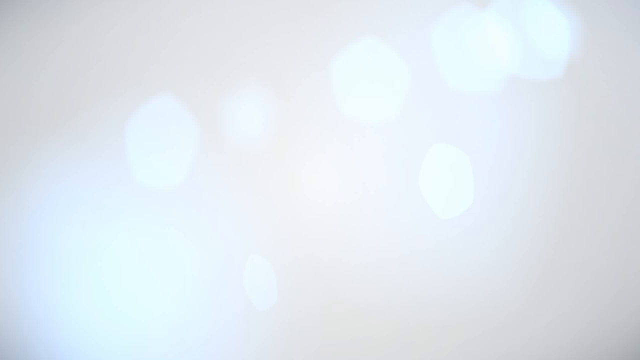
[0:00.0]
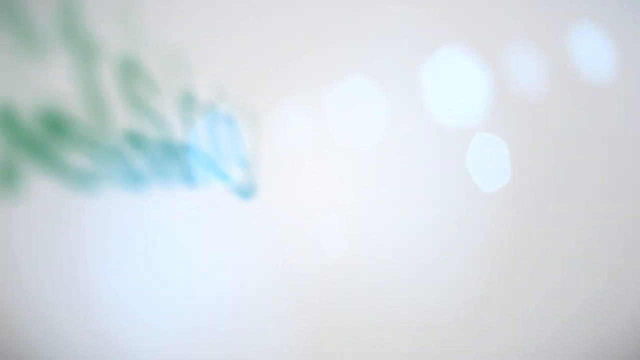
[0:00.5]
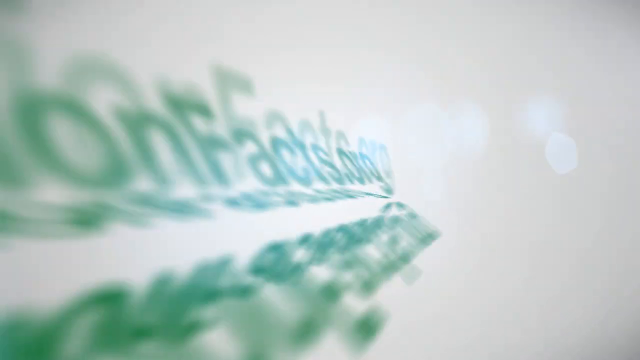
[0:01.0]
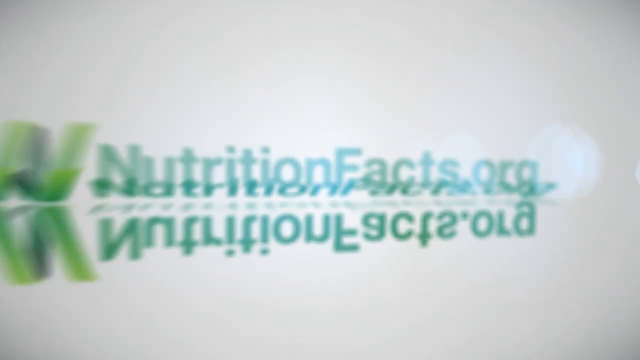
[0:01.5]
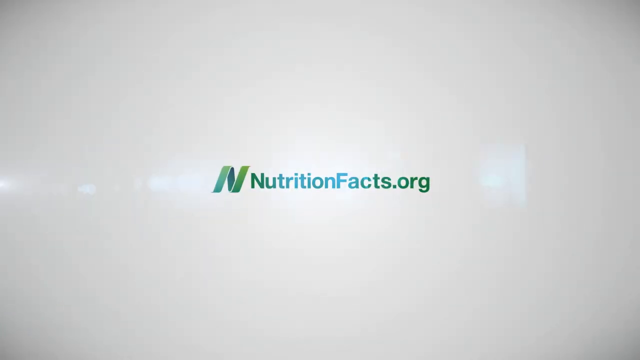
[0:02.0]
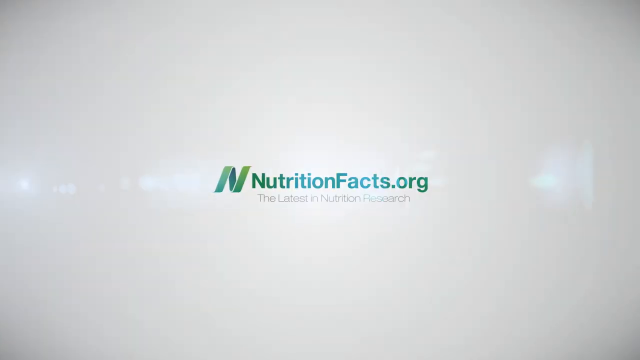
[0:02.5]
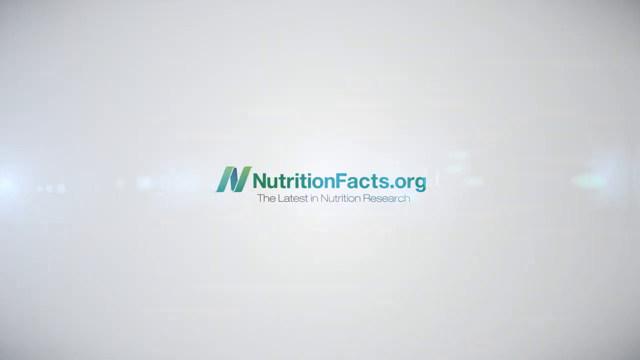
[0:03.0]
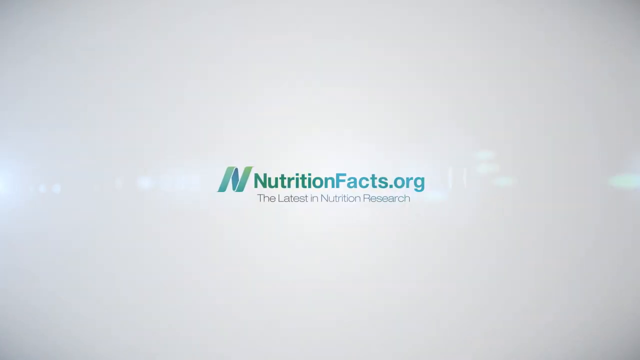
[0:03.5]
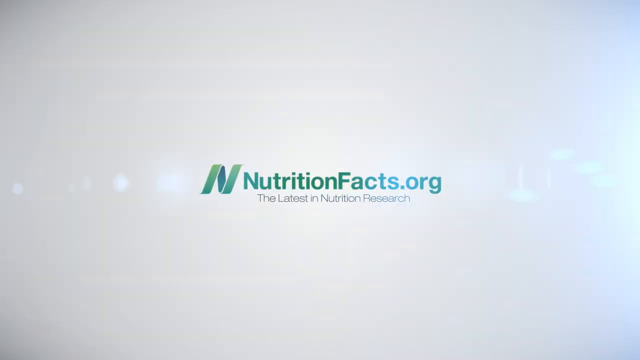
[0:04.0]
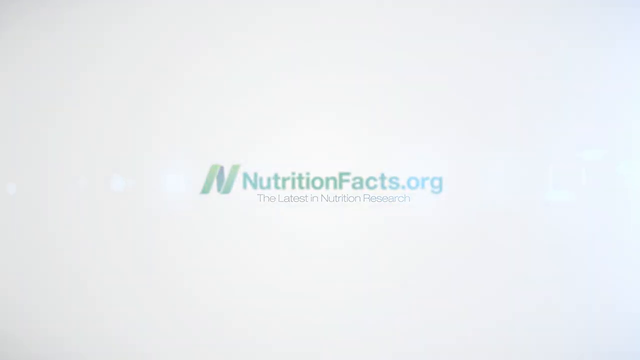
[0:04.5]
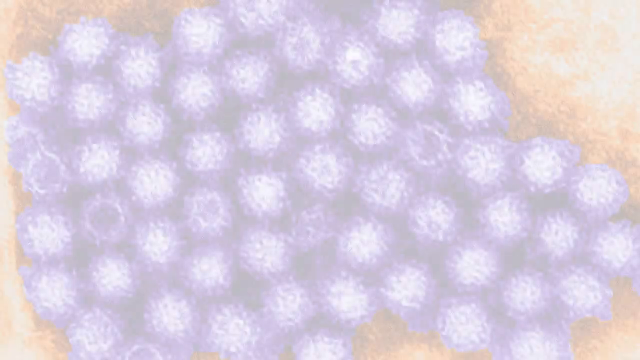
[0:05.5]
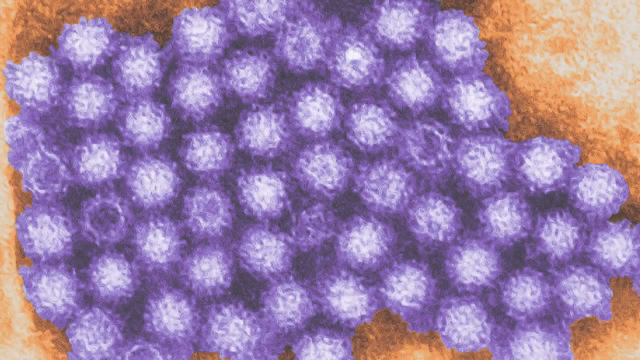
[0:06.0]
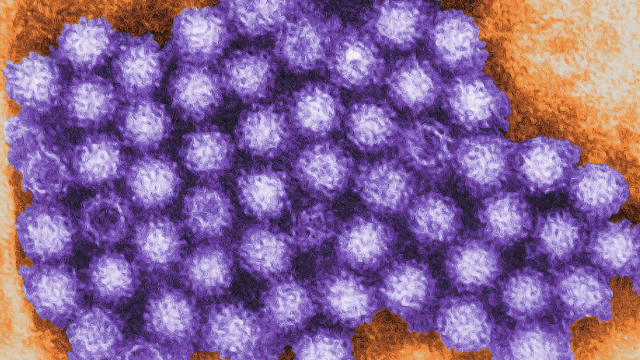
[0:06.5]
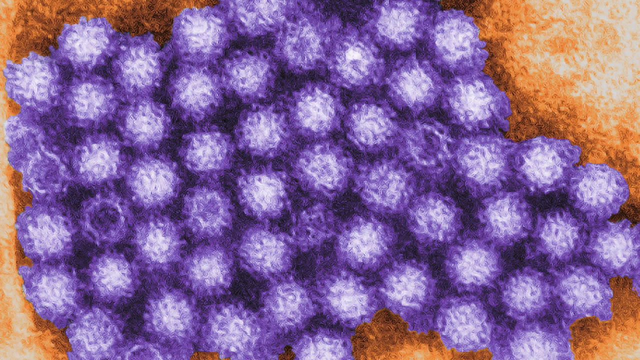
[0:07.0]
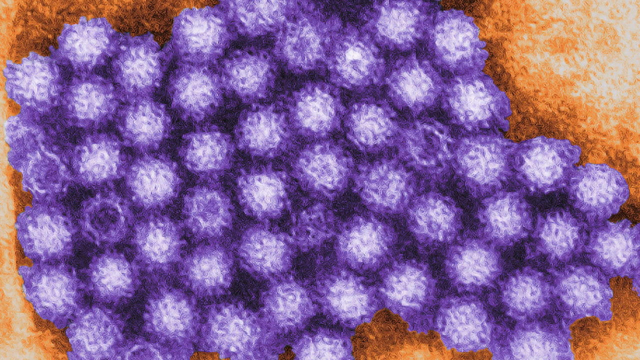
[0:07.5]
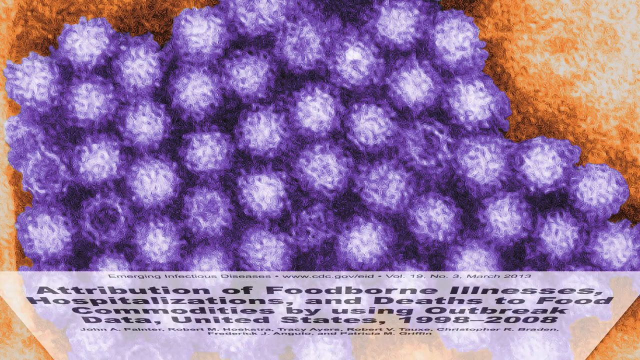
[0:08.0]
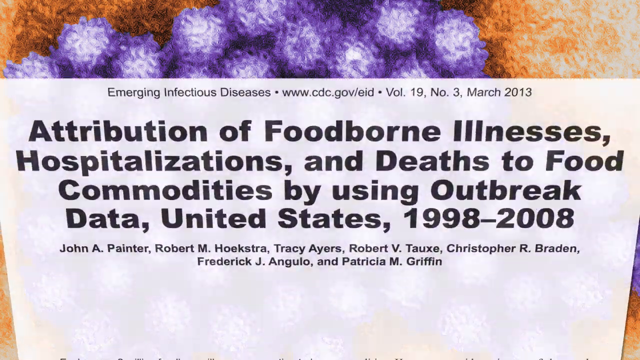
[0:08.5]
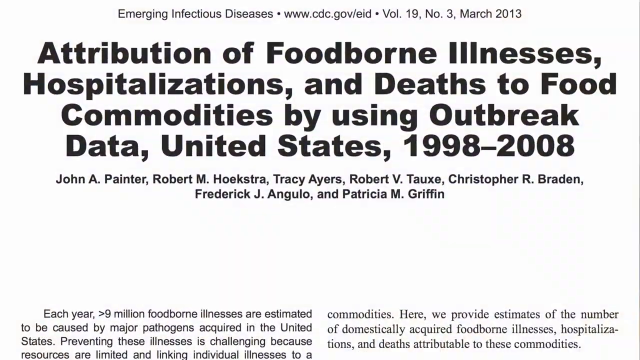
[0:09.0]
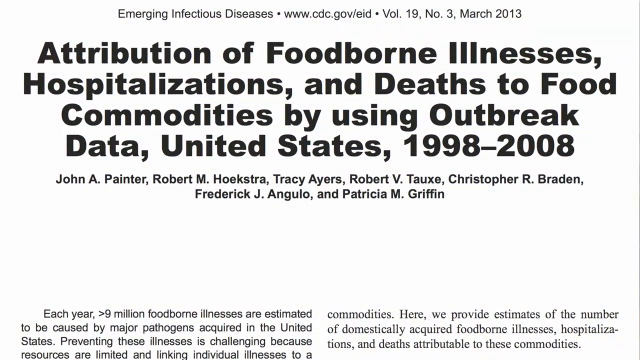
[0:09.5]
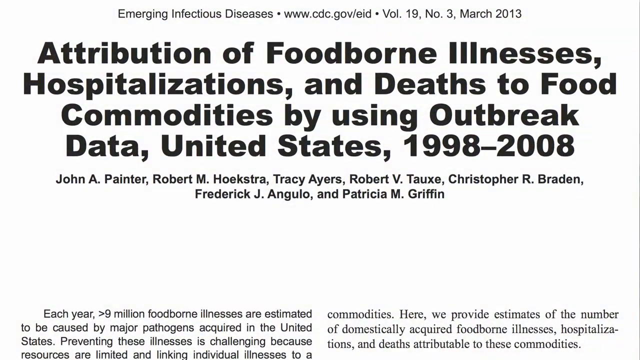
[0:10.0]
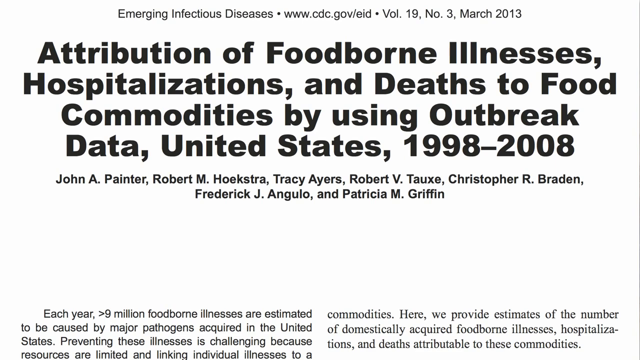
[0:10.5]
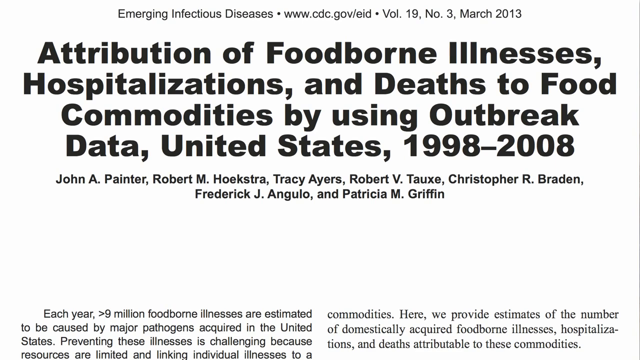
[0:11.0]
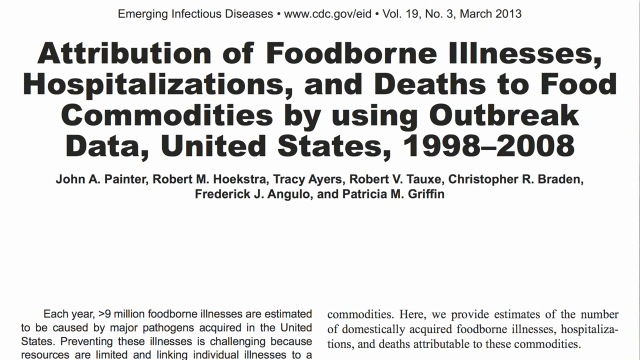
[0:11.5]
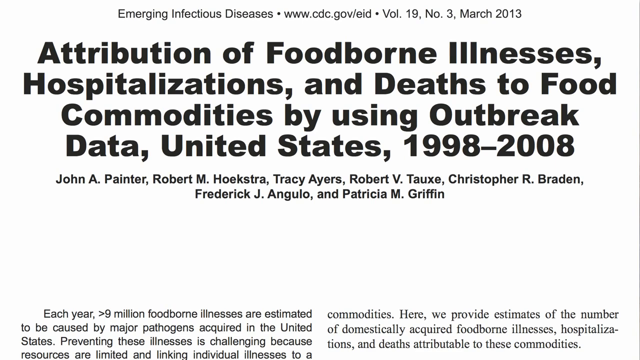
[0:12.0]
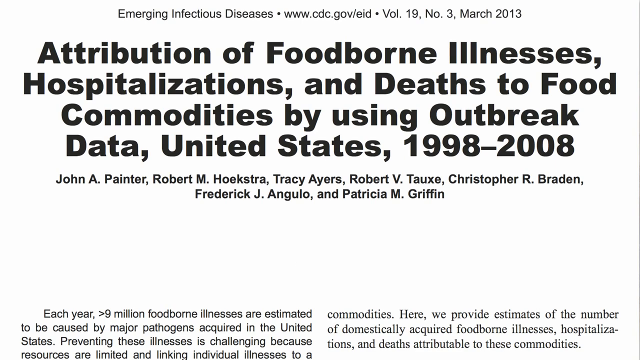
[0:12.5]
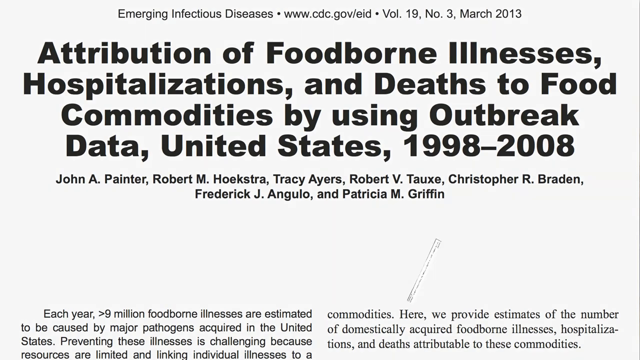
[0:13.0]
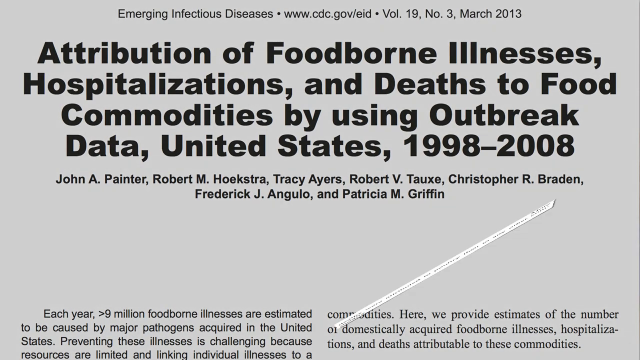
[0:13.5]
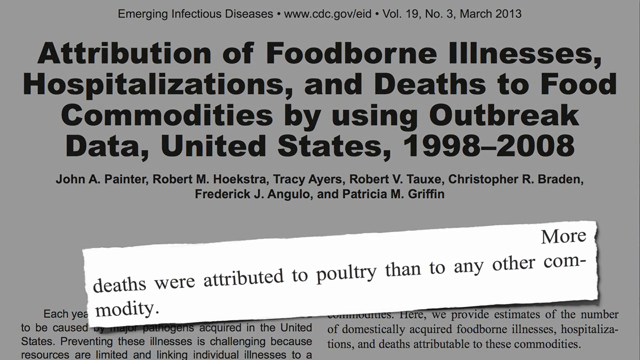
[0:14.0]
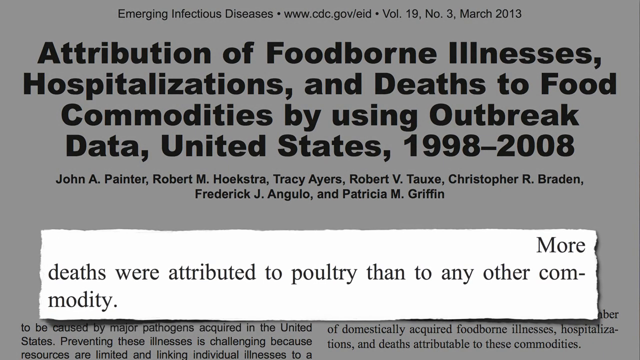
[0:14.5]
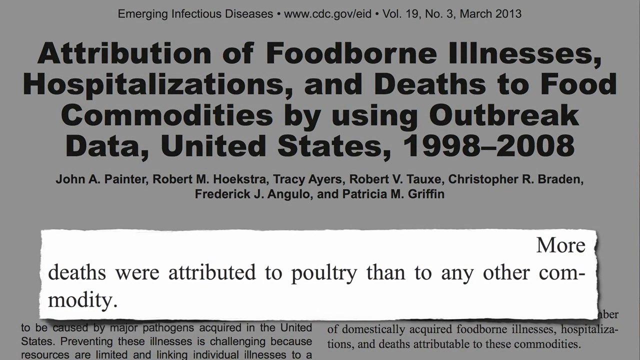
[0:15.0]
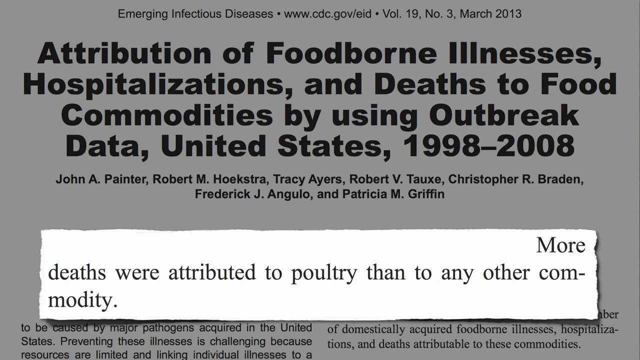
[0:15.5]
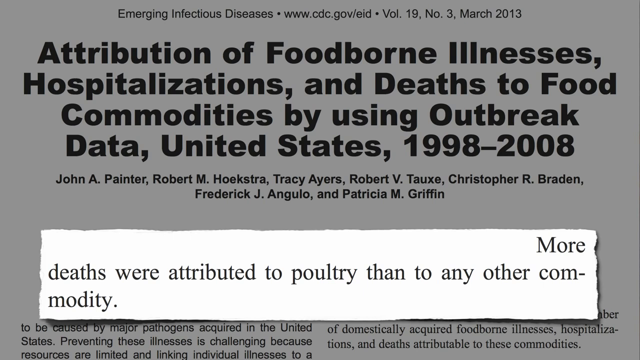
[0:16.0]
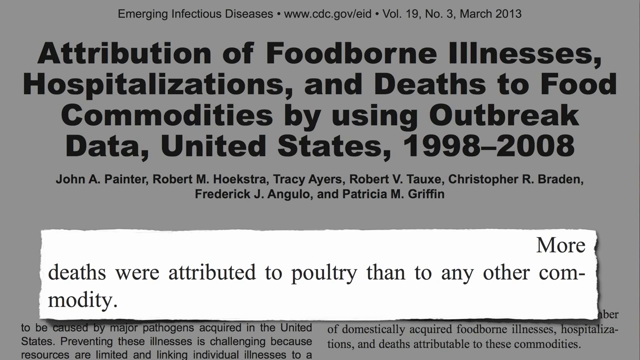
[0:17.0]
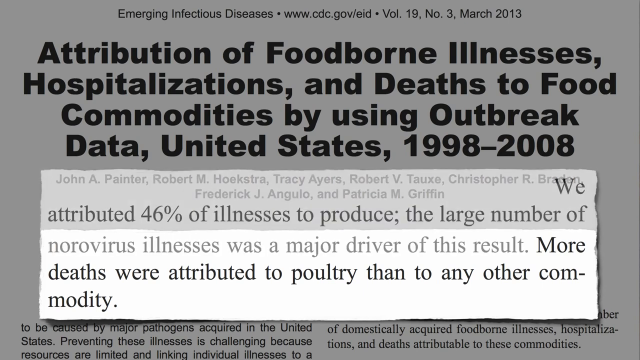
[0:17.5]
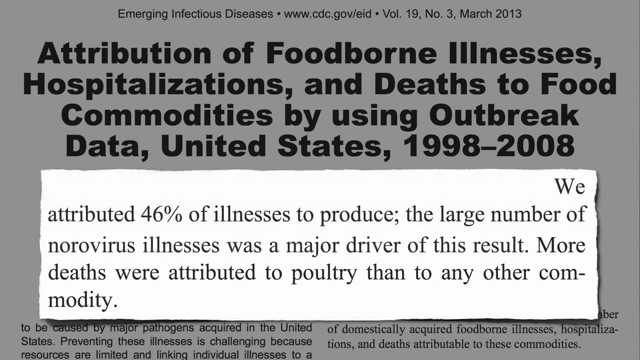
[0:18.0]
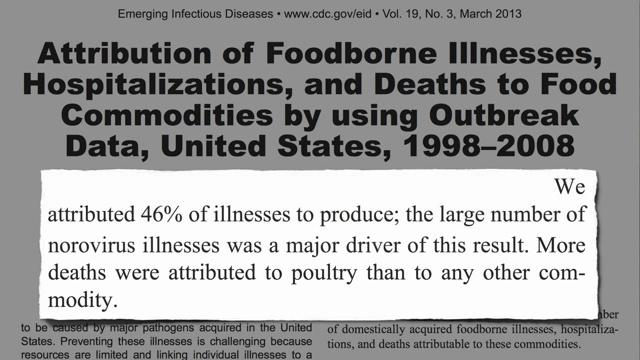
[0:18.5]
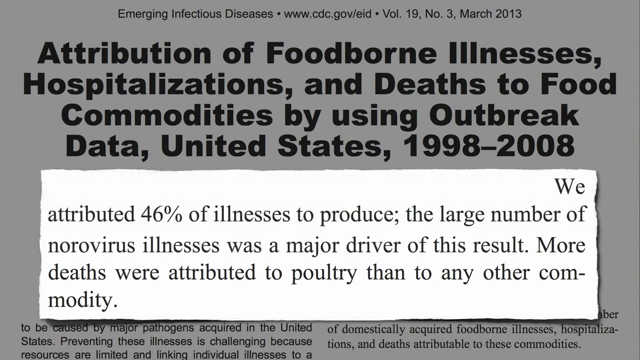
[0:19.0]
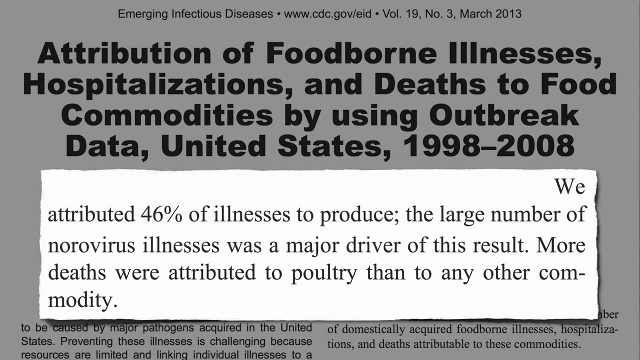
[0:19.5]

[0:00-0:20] The video opens on a white title screen with flashing orbs like lights, and the website name "nutritionfacts.org" flips open in a backwards flipping motion, with a green capital N logo in front of it. All of the text is green. Once it appears, a bright light flashes along the middle of the screen where the text is, another bright light shows up on the right side of the screen, and the screen goes to white. The next shot is some sort of artwork or graphic with circles everywhere; most of the circles are white with purplish edges, set against an orange background that is a bit darker orange near the circles. A screenshot of an article then flips open, titled "attribution of foodborne illnesses hospitalizations and deaths to food commodities by using outbreak data United States 1998 to 2008." A quote pulled from it reads "more deaths were attributed to poultry than to any other commodity." Further text attributes 46% of illnesses to produce and states that "the large number of norovirus illnesses were a major driver of this result."